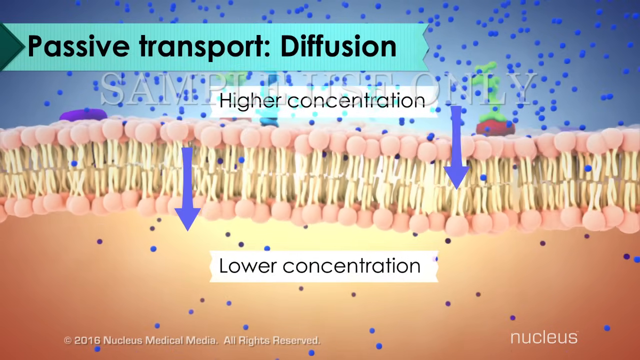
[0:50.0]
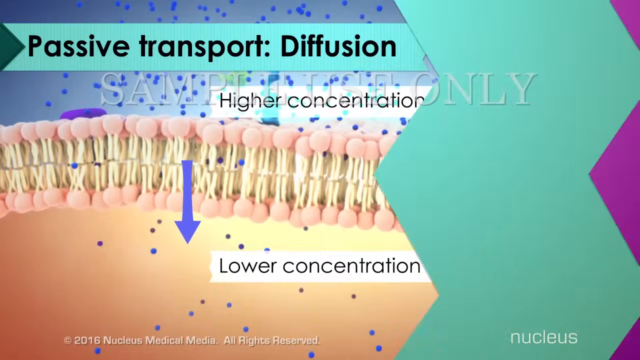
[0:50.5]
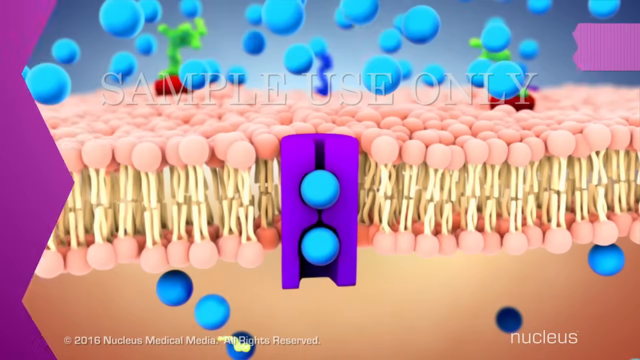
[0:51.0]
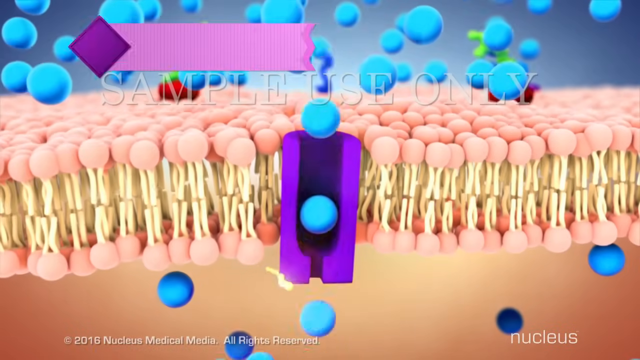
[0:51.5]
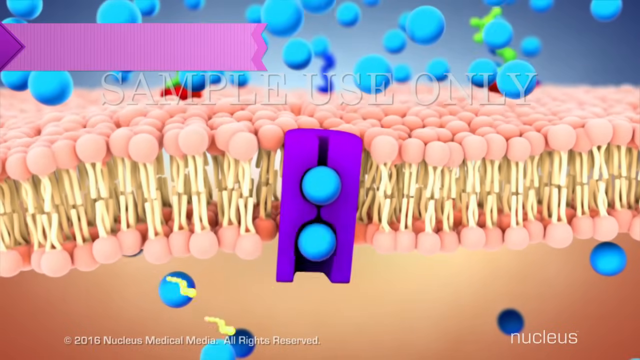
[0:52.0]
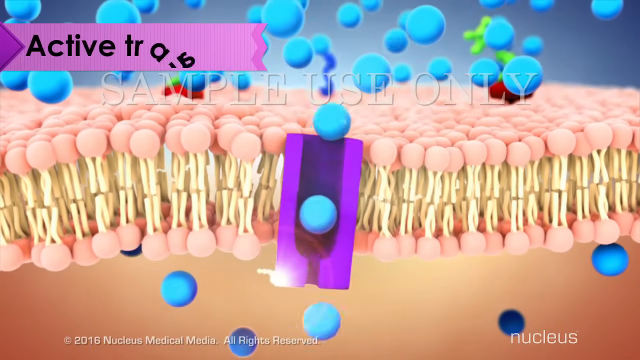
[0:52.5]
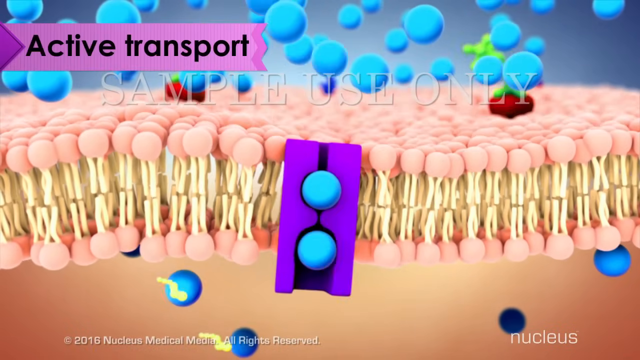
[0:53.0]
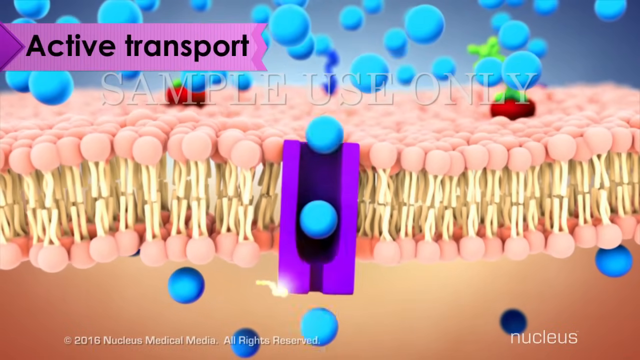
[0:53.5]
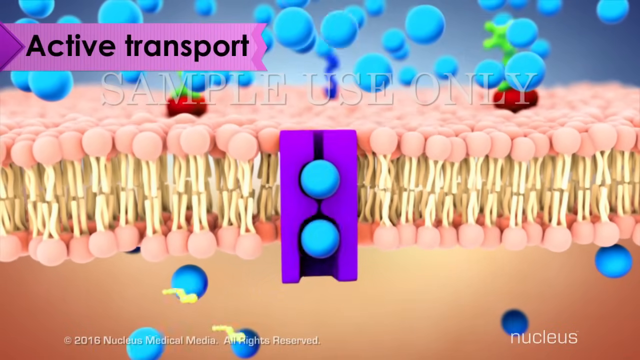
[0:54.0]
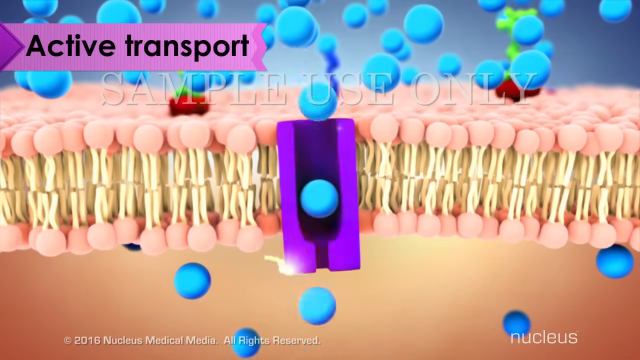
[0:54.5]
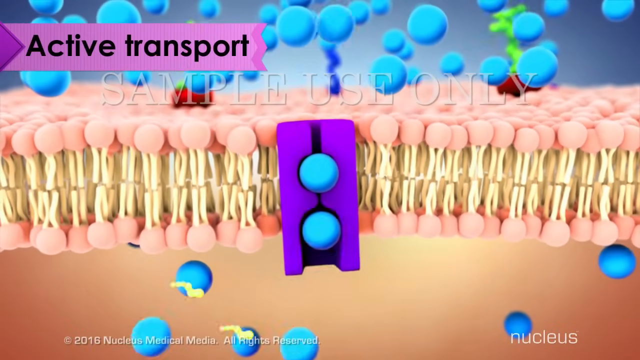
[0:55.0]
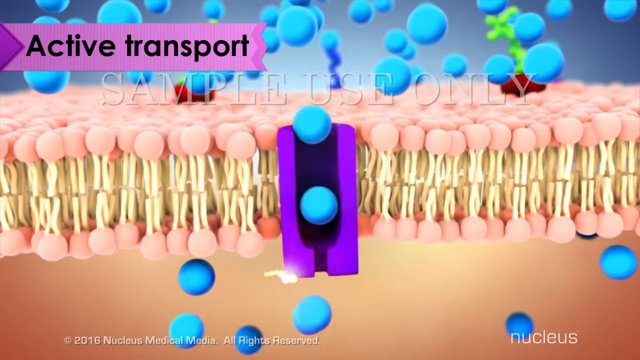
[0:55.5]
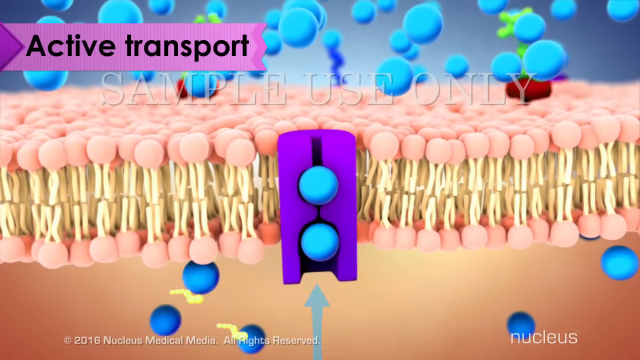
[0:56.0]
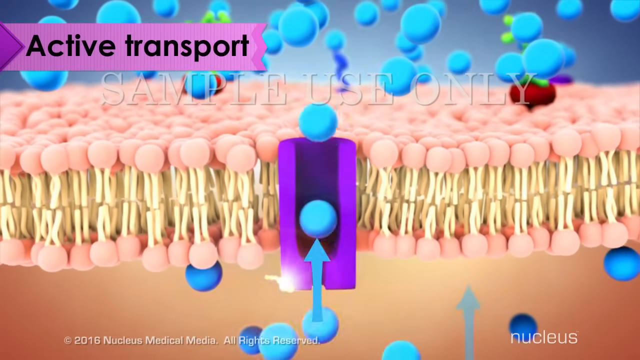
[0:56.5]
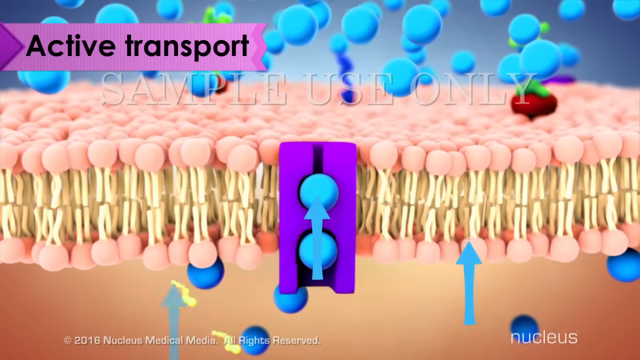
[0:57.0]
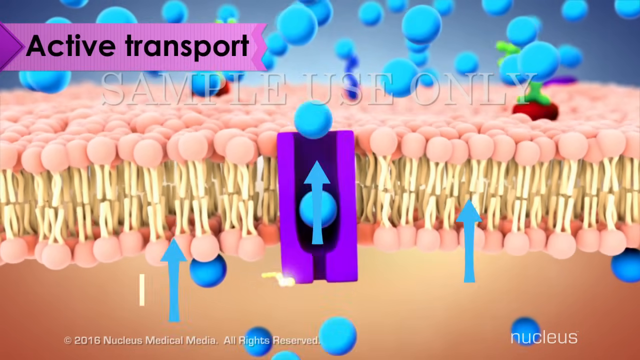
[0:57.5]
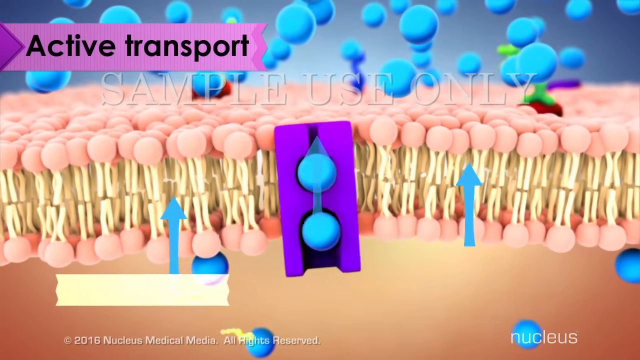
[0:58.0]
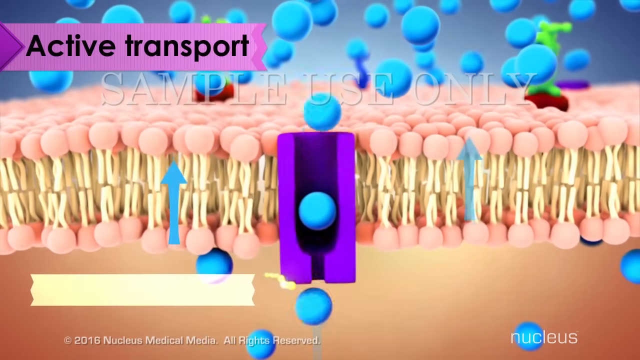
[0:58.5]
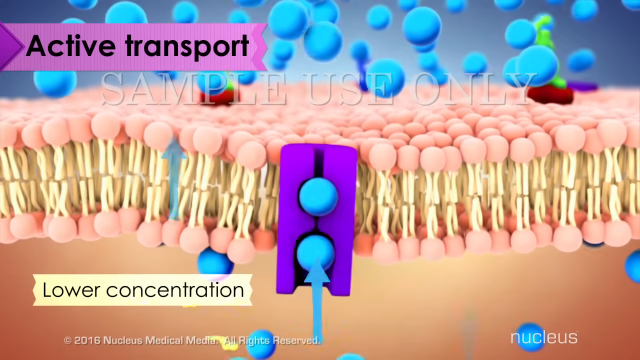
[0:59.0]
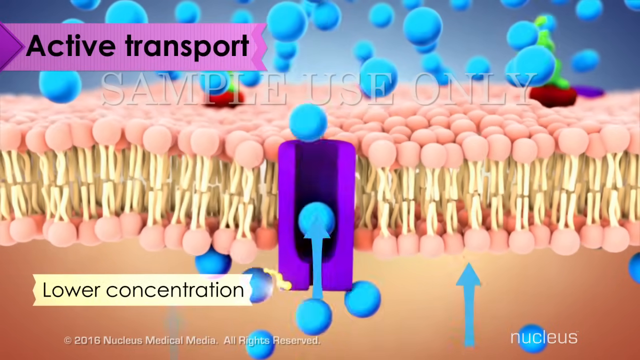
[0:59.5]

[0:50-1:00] Another type of transport, active transport, is shown, using proteins embedded in the cell membrane. A purple protein embedded in the membrane carries molecules from a lower concentration inside the cell membrane to outside it, with the molecules passing through this protein chute. Each time a molecule passes through the chute, it produces something. There is no text explaining what it does; only the animation shows it. Upward arrows point through the cell membrane.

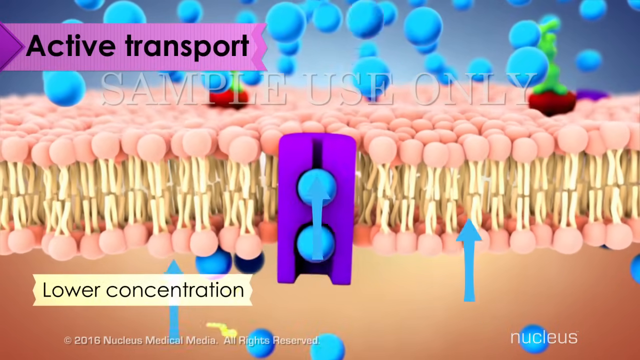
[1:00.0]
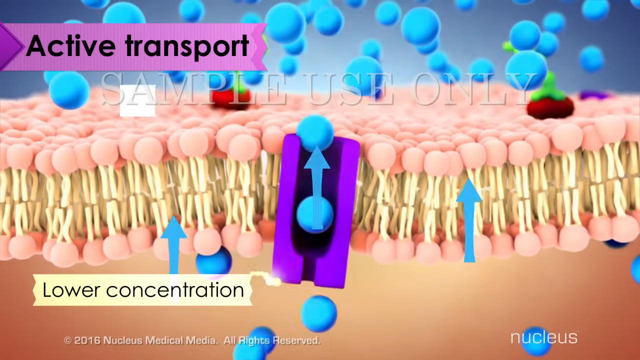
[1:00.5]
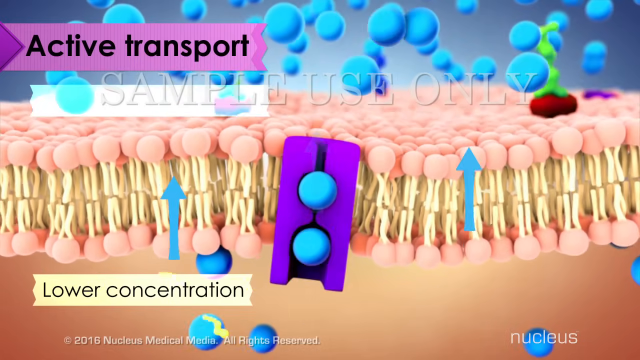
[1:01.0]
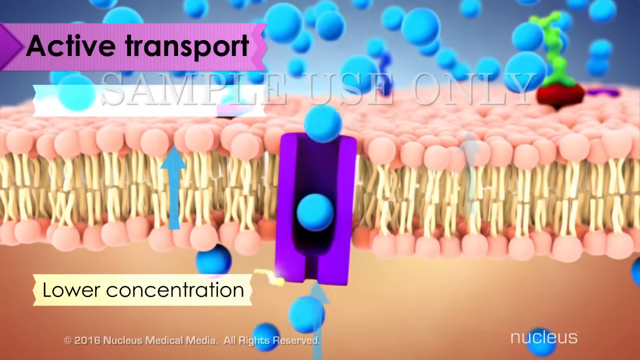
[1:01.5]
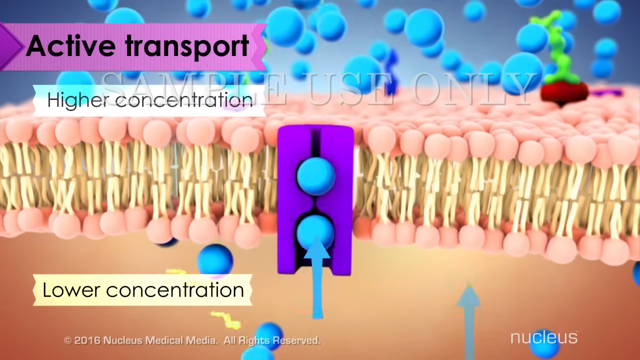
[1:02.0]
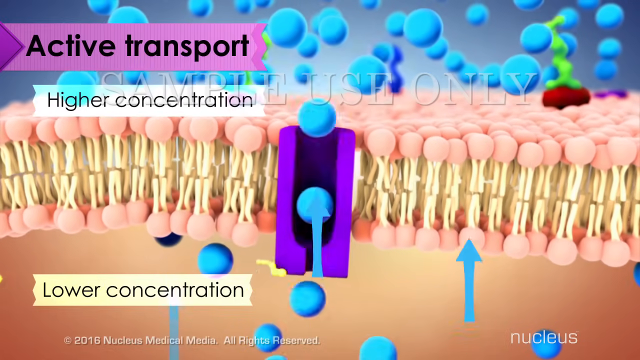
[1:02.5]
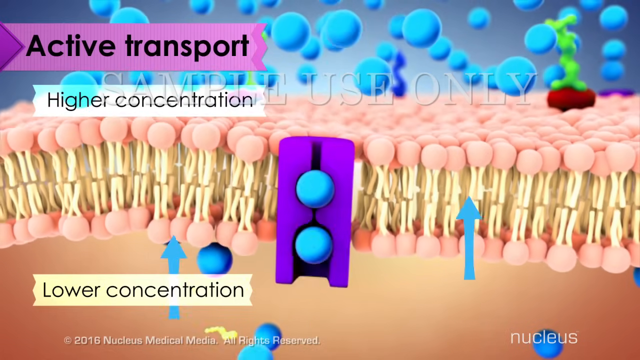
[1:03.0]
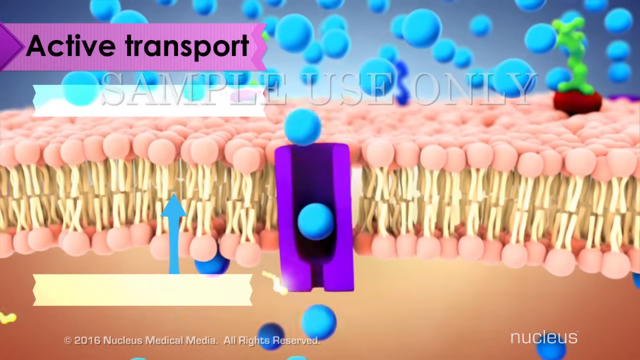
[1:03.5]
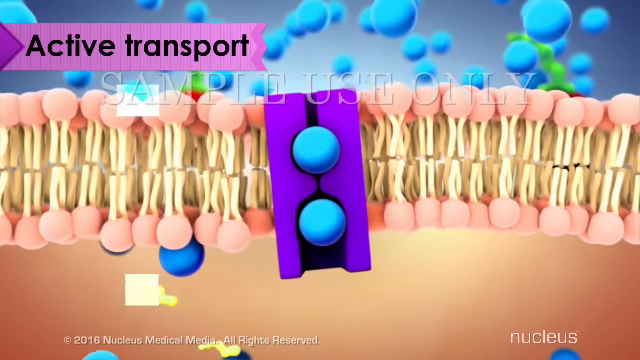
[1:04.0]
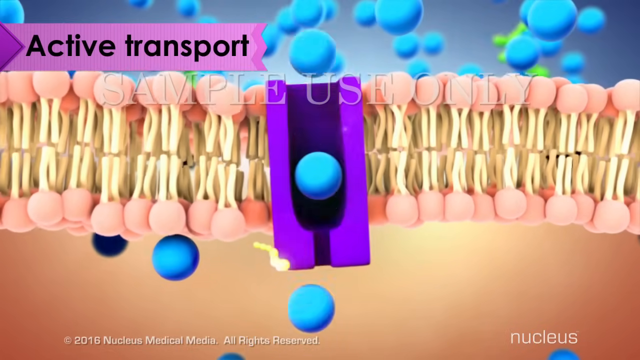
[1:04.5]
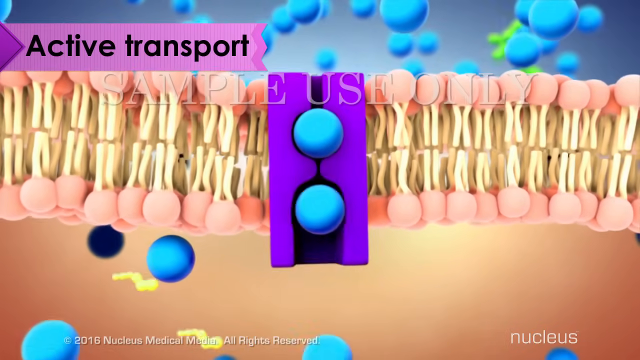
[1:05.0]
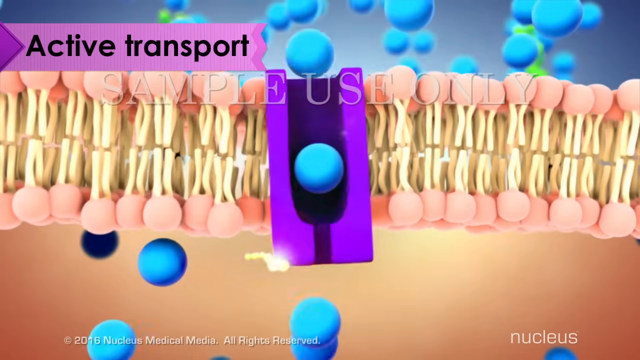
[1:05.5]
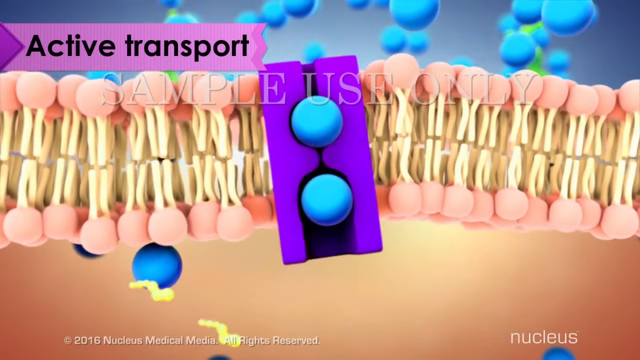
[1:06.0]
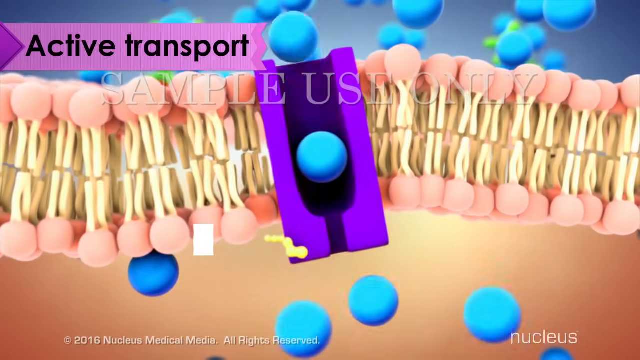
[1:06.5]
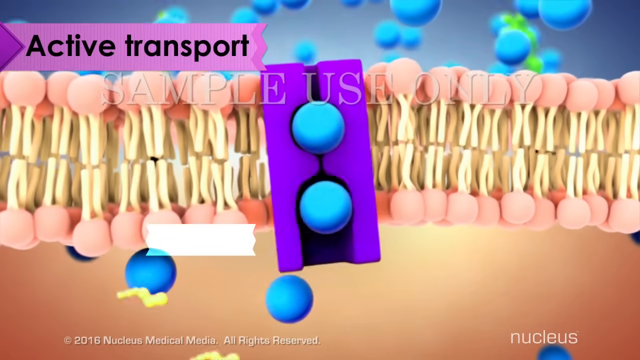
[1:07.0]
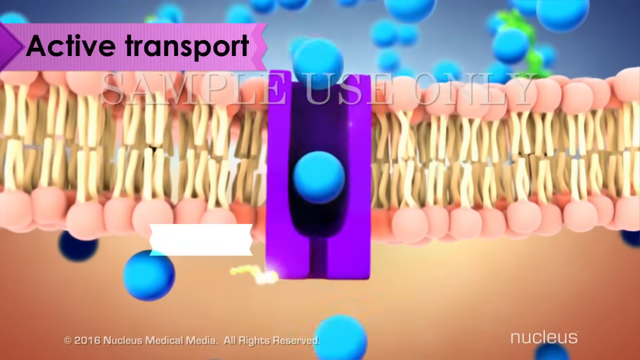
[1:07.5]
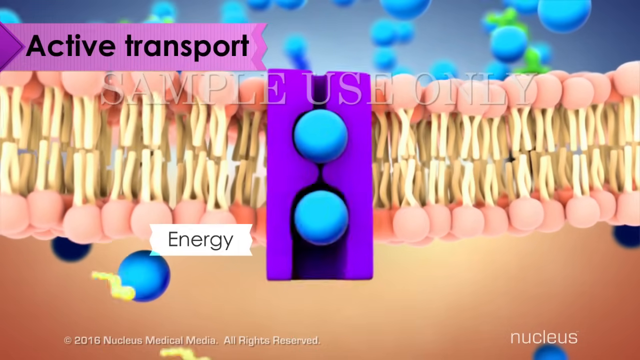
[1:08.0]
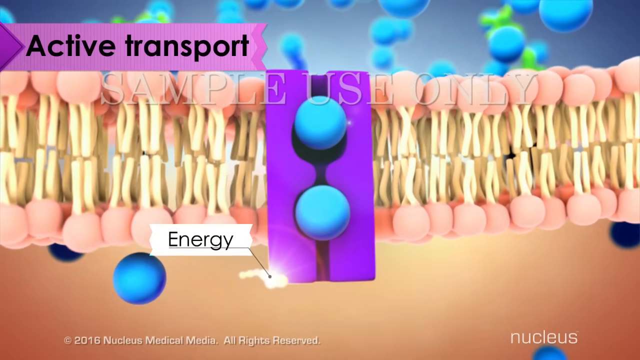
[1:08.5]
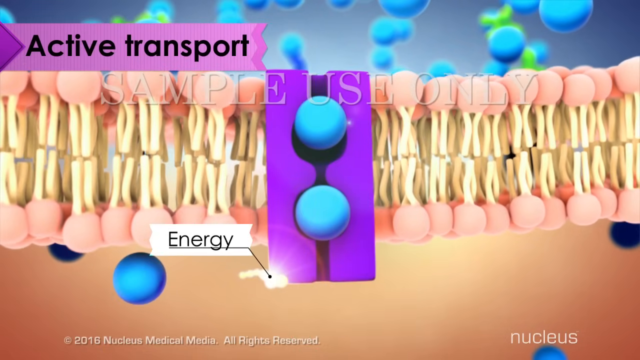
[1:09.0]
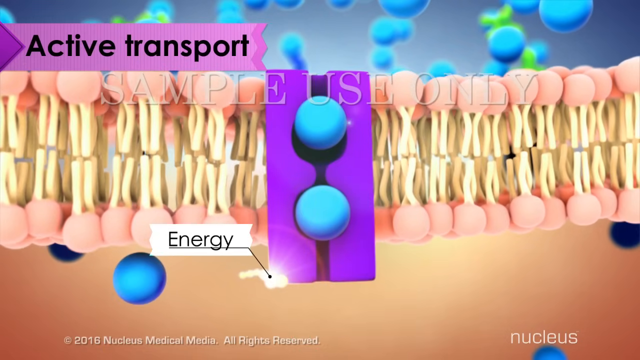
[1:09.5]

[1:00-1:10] The view zooms in to the cell membrane and the purple protein channel embedded in it. Blue molecules from inside the cell pass through the purple channel to the outside, and each time a molecule passes through, a yellow thing representing energy touches the tip of the channel. There is no text explaining how it works, only the visual representation. Blue arrows point upward, and some blue molecules are outside the cell membrane. A text overlay says "sample use only," the area inside the cell membrane is labeled "low concentration," and outside it says "high concentration."